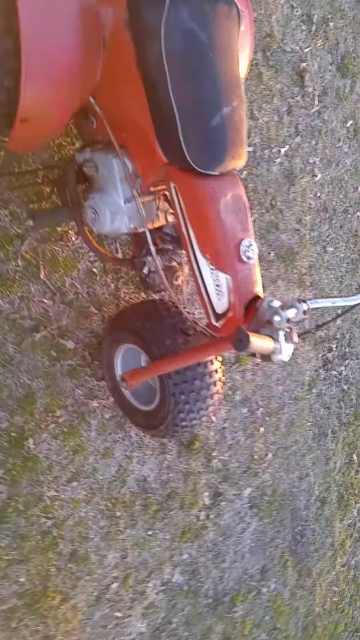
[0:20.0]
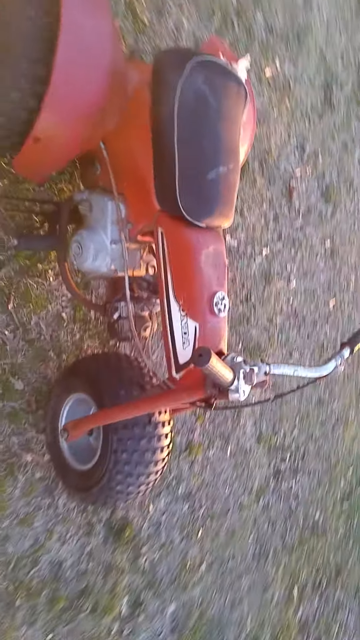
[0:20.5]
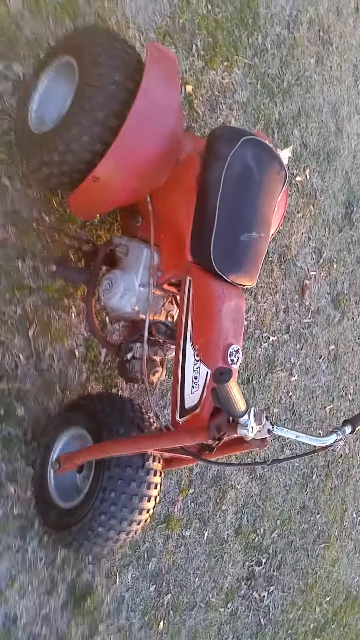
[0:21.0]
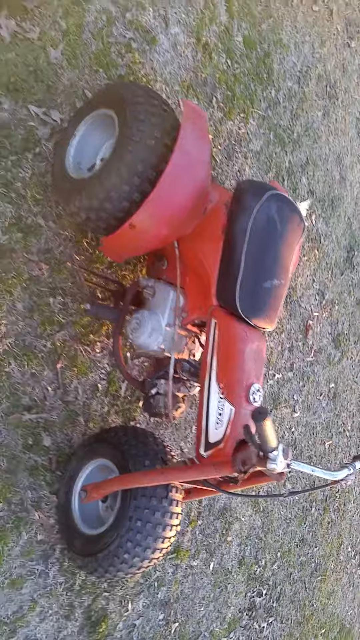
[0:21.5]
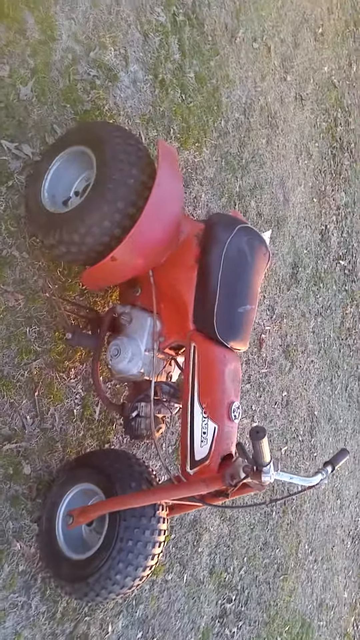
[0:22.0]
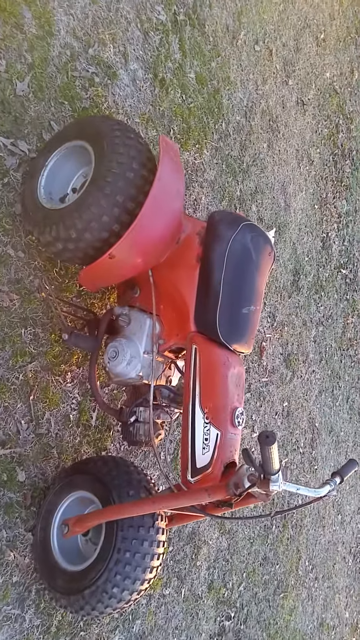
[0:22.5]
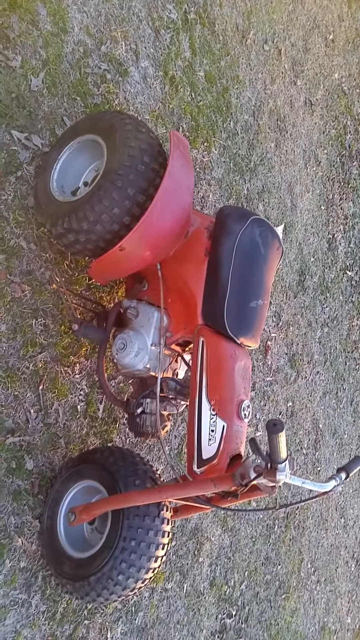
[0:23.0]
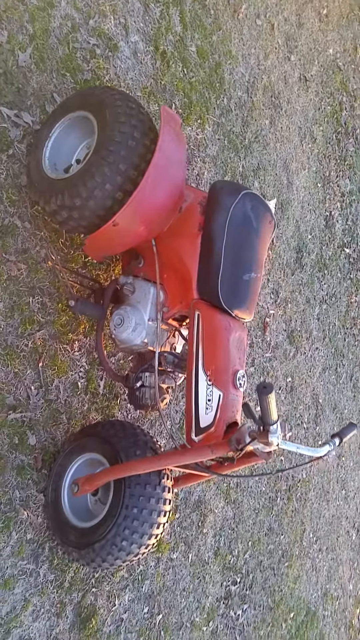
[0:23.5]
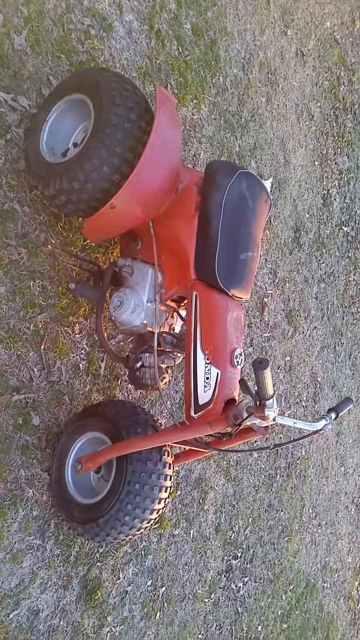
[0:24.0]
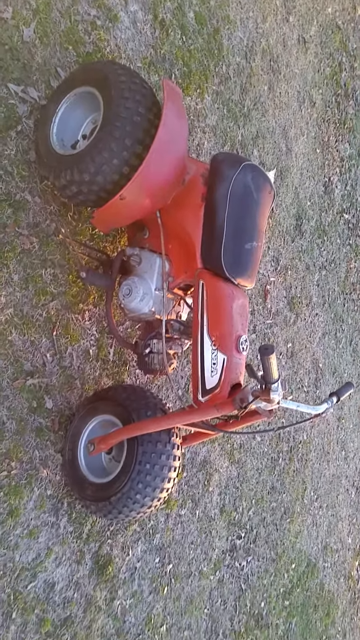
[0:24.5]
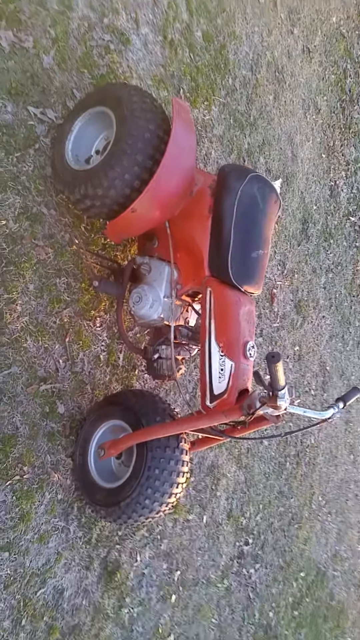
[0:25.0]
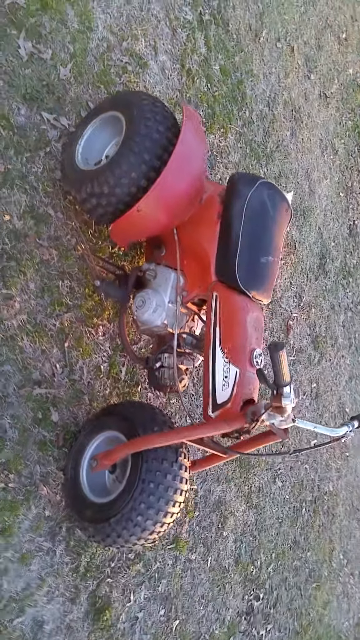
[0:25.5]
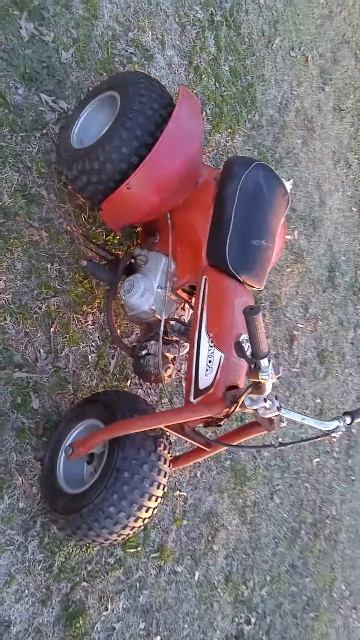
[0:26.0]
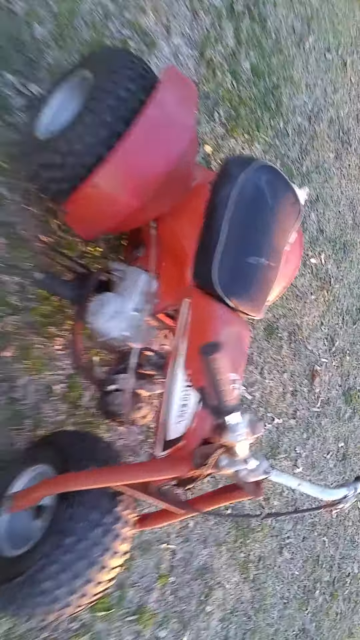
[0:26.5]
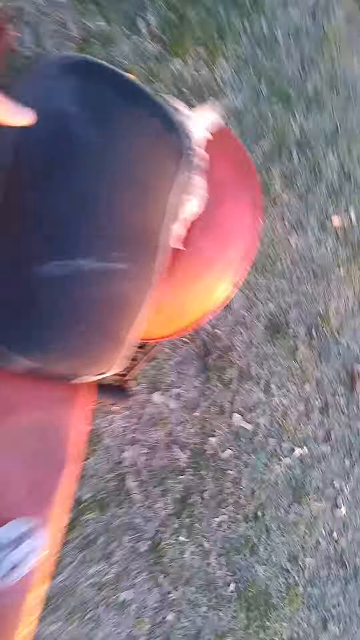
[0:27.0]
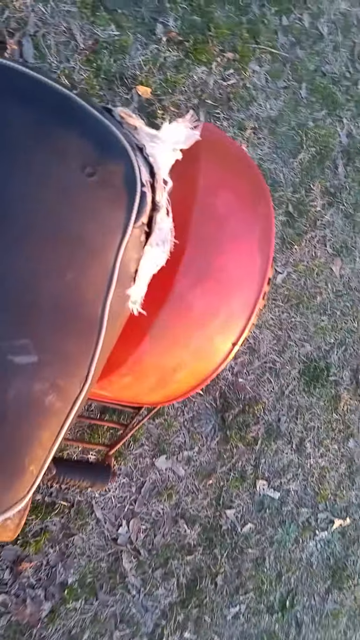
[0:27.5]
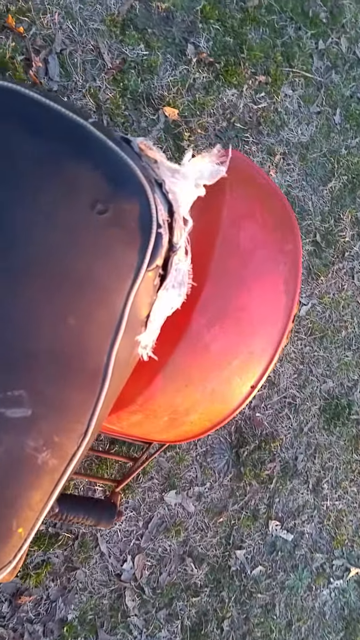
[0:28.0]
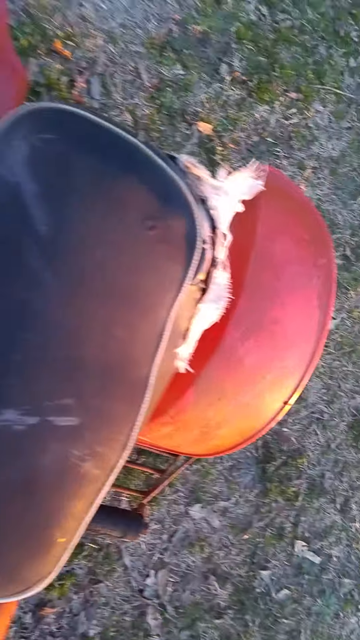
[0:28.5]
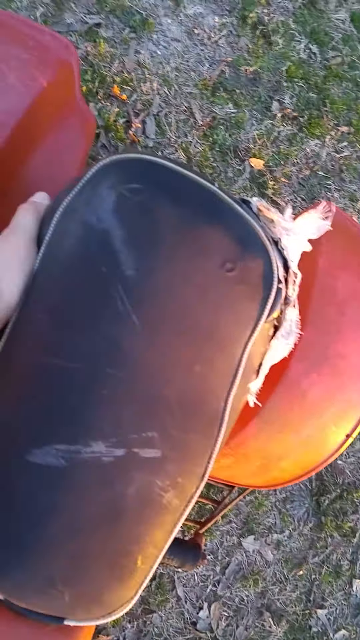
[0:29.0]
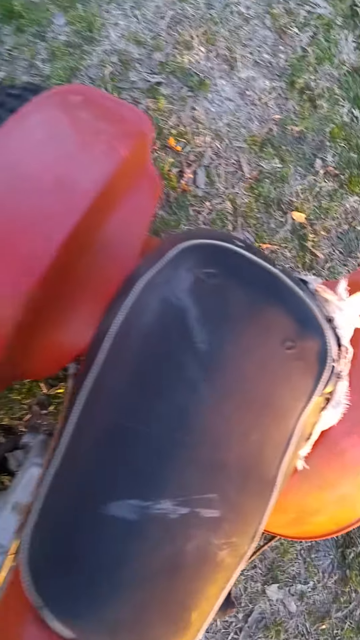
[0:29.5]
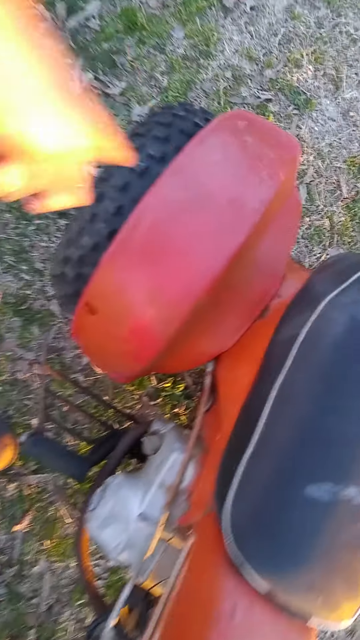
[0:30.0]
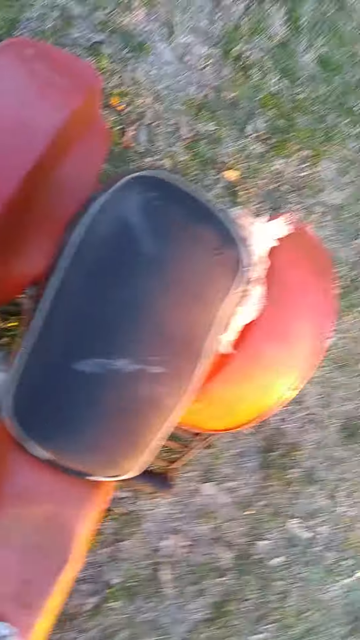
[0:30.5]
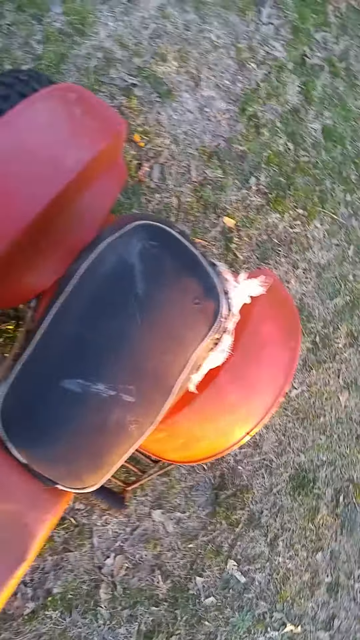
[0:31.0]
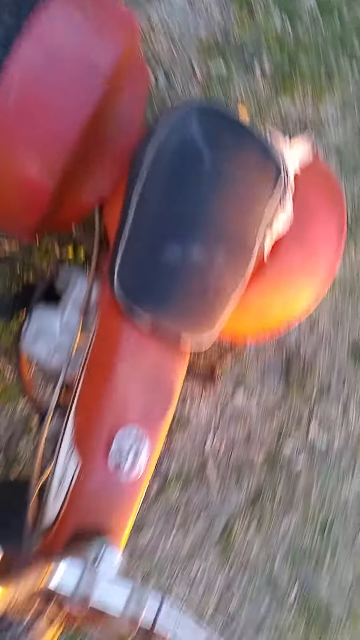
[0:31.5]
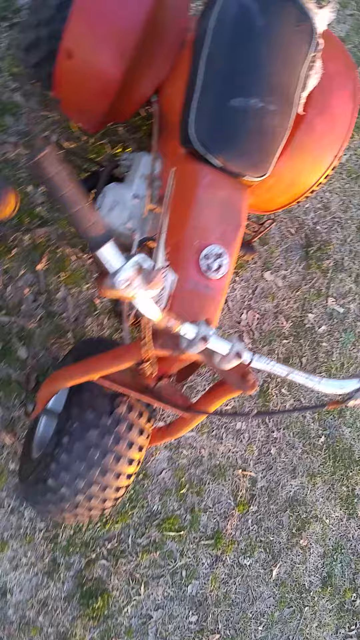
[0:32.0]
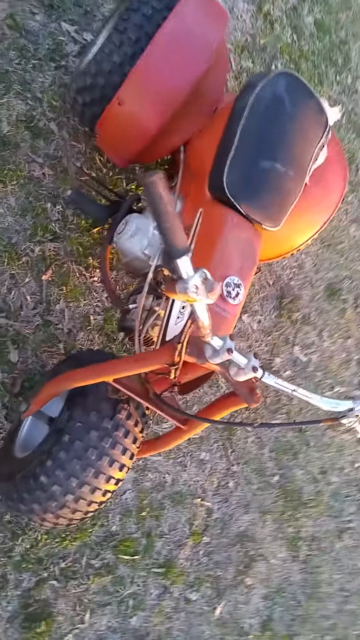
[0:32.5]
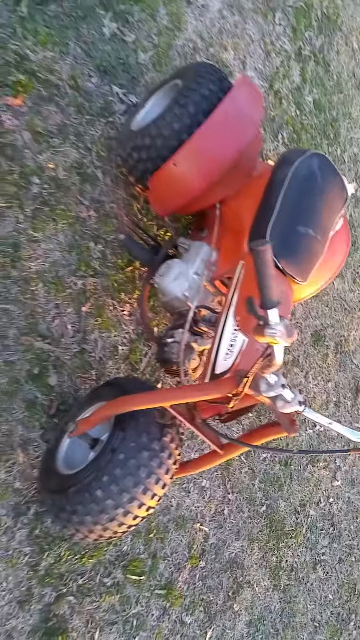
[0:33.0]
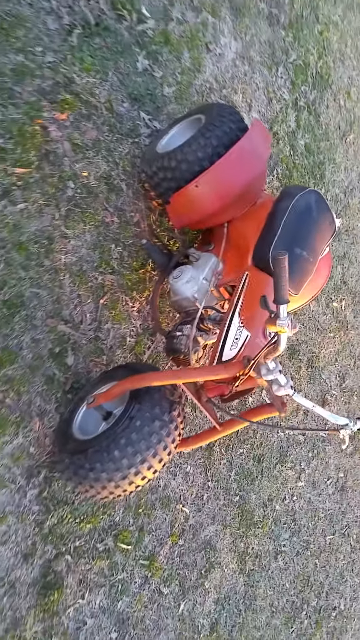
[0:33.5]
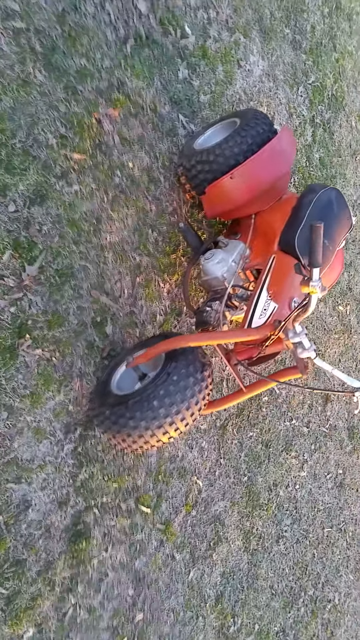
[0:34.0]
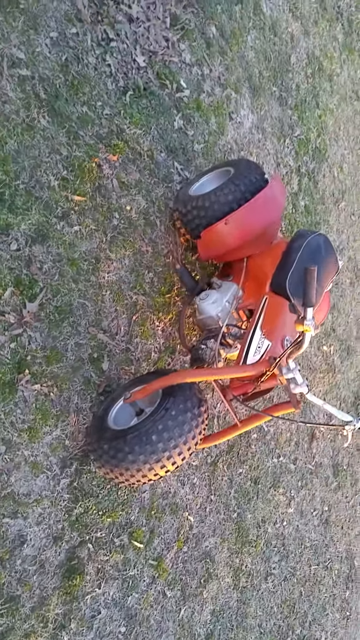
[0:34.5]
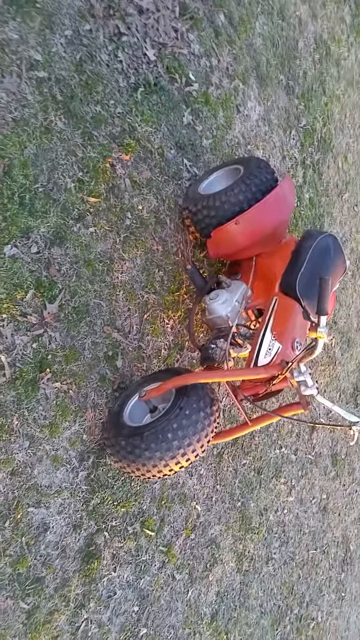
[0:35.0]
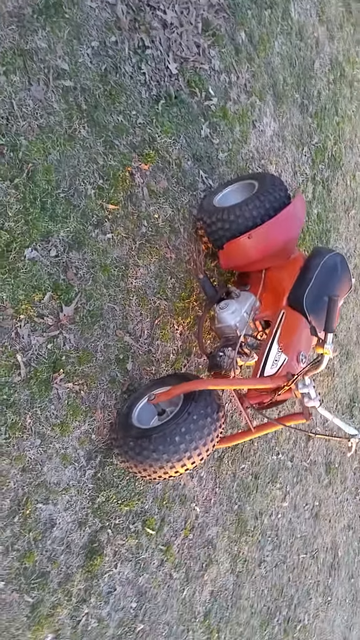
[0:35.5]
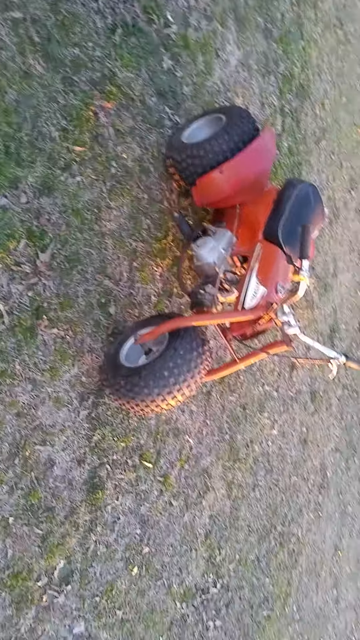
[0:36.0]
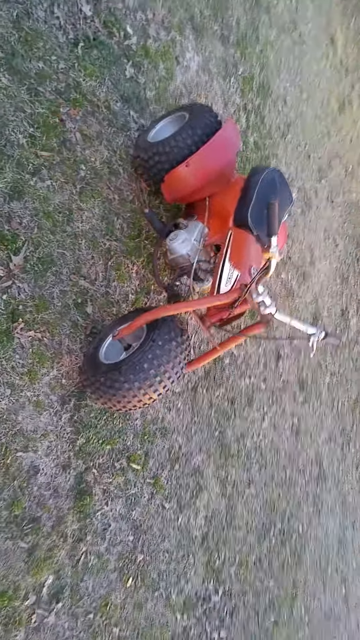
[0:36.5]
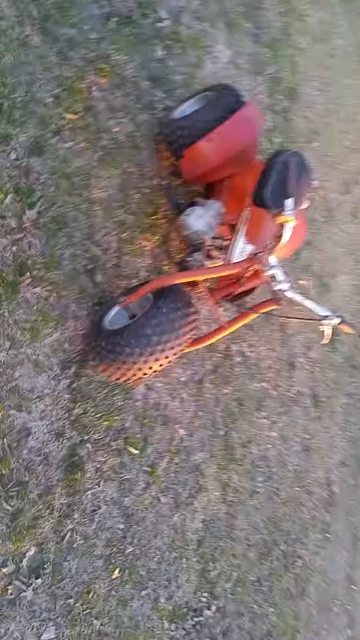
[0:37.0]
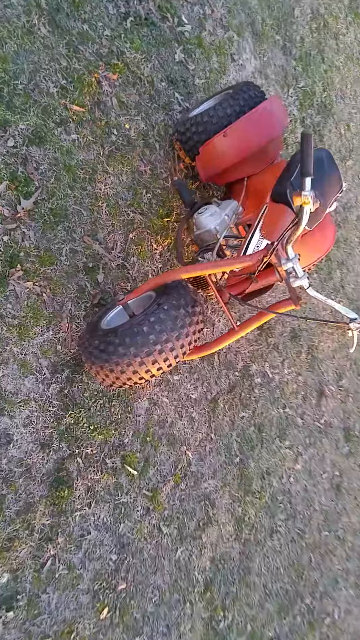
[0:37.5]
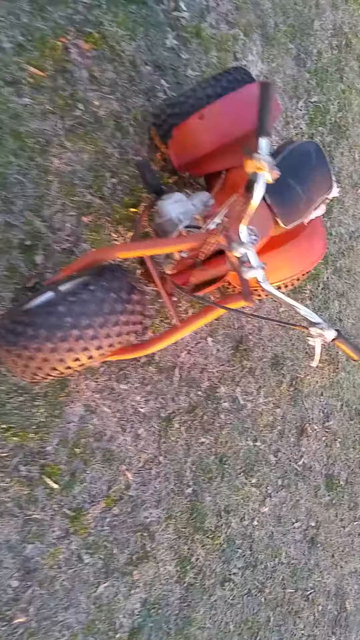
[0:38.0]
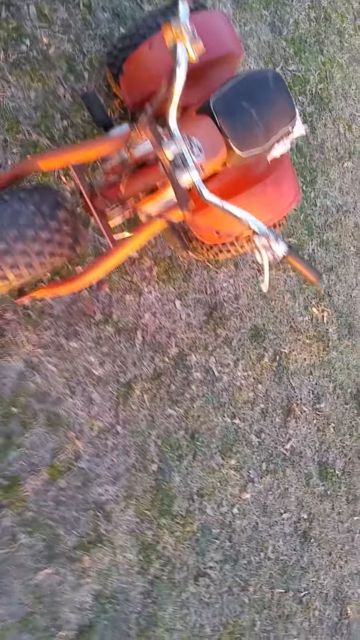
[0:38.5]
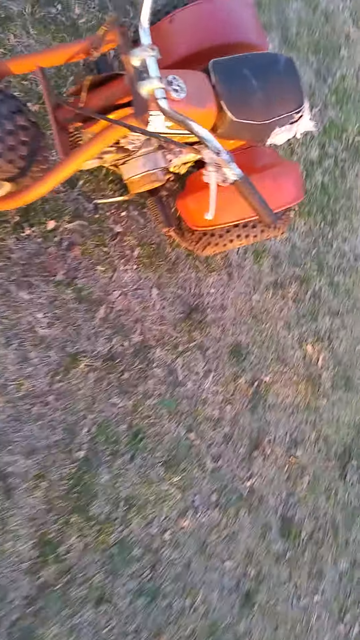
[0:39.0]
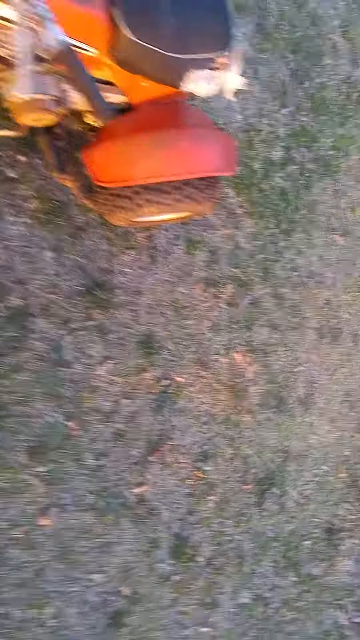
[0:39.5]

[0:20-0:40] A close-up view shows the miniature three-wheeler. Its body is red, and it has a black cushioned seat, metal handlebars on the front, and three small tires. It is parked in an area with very little grass, apparently more dead grass than green grass. The person filming moves over the top of the three-wheeler, then films the grass beside it, and then brings the camera back over the three-wheeler. It looks like a bright day outside.